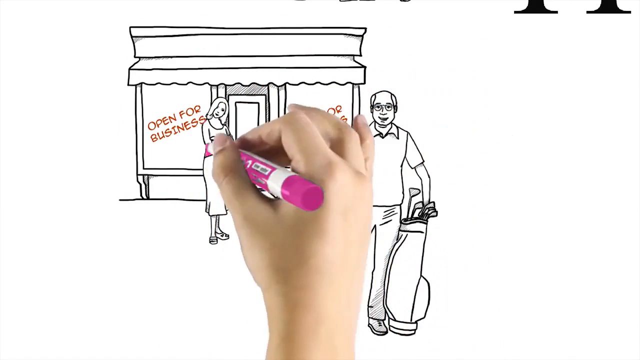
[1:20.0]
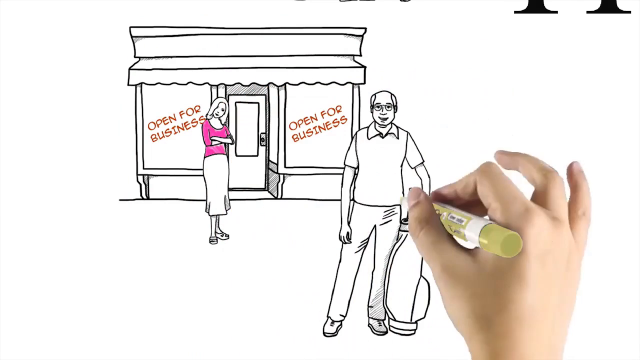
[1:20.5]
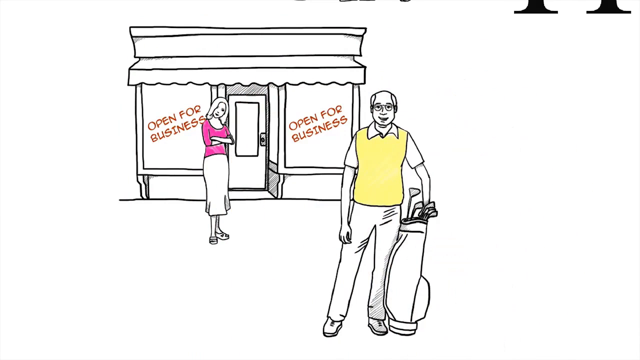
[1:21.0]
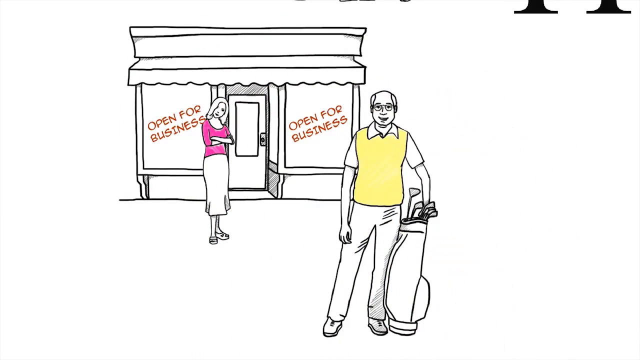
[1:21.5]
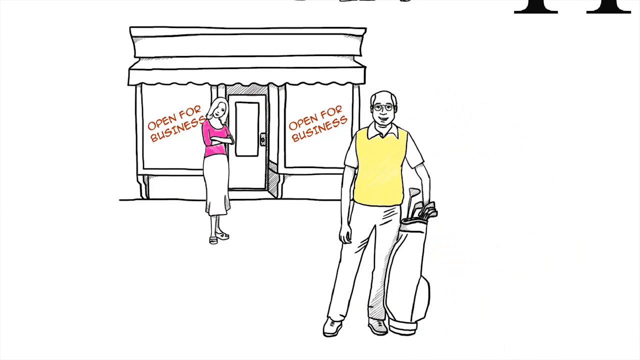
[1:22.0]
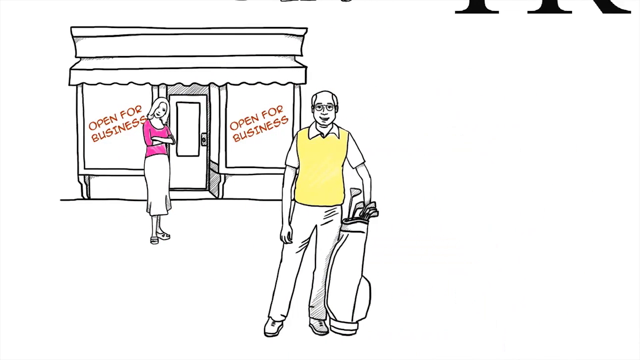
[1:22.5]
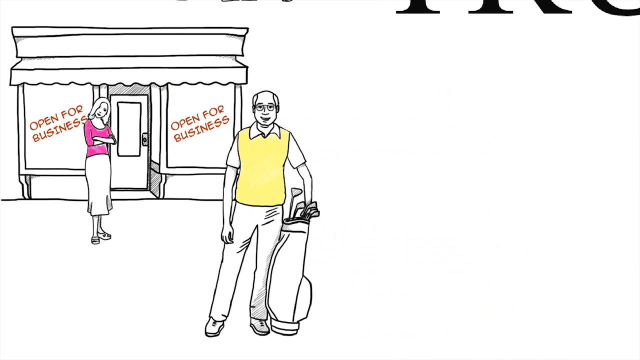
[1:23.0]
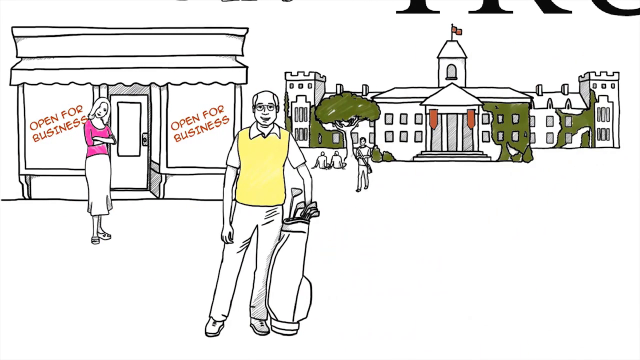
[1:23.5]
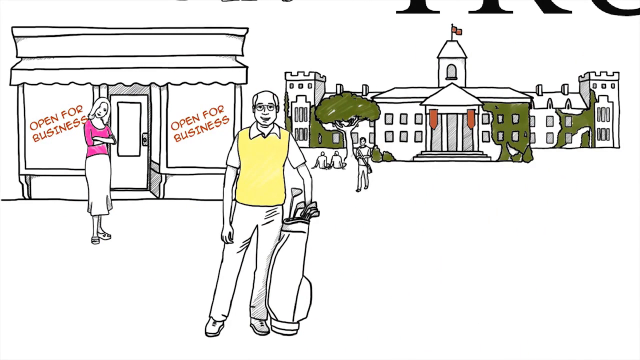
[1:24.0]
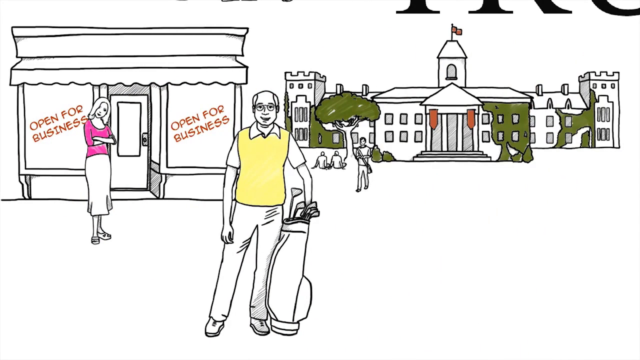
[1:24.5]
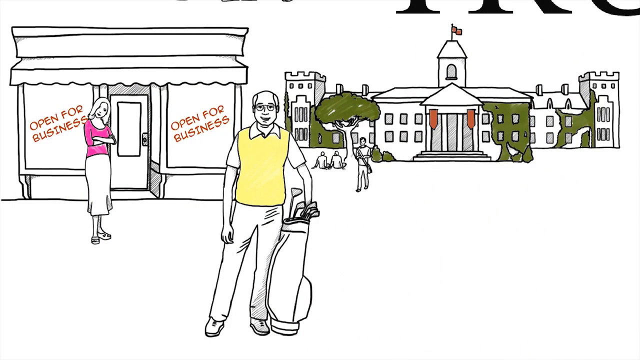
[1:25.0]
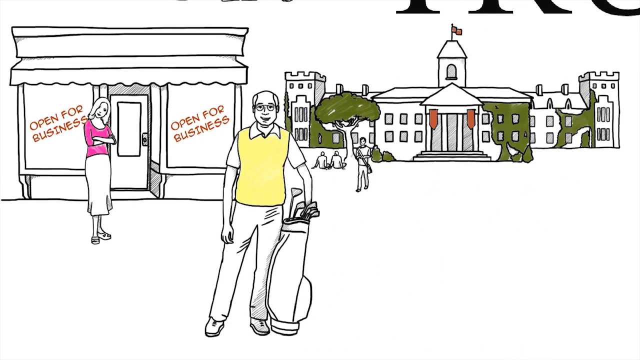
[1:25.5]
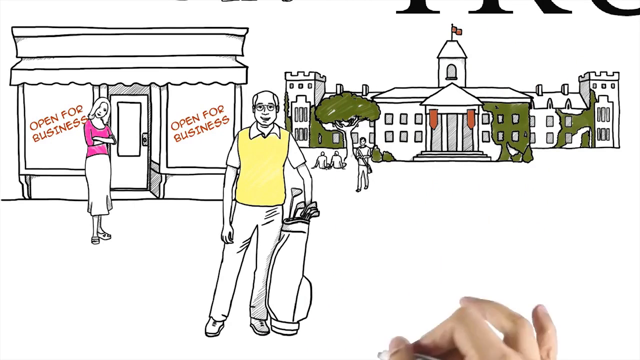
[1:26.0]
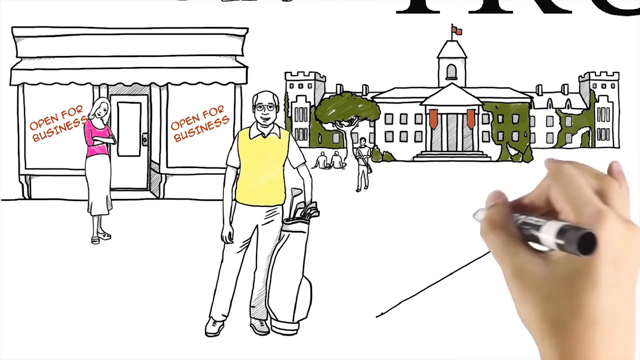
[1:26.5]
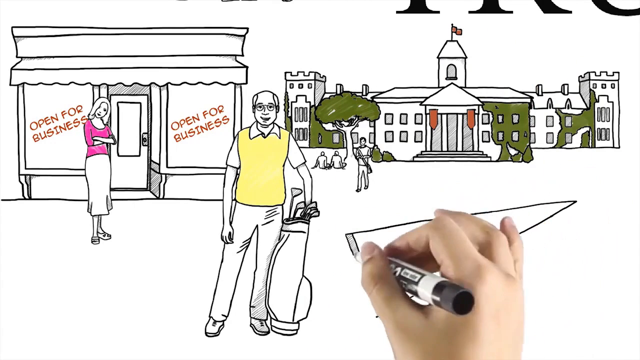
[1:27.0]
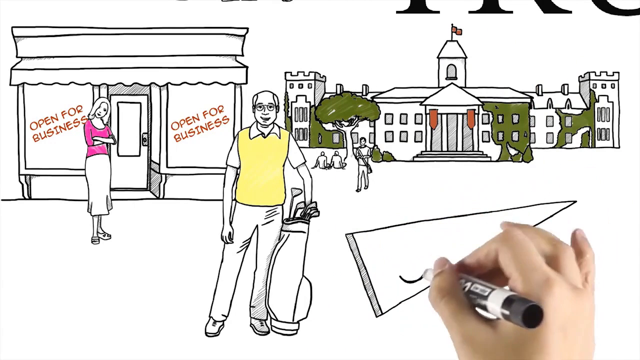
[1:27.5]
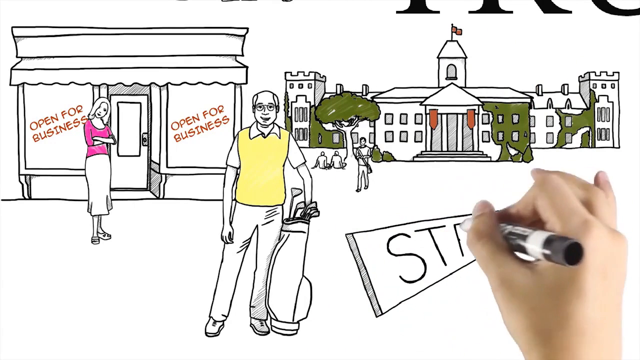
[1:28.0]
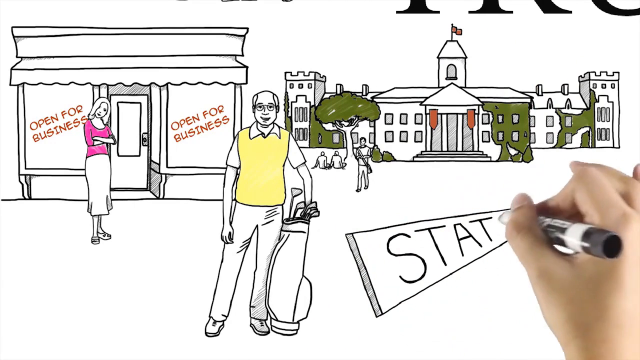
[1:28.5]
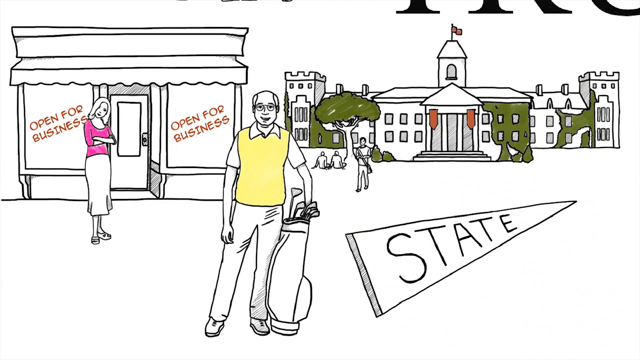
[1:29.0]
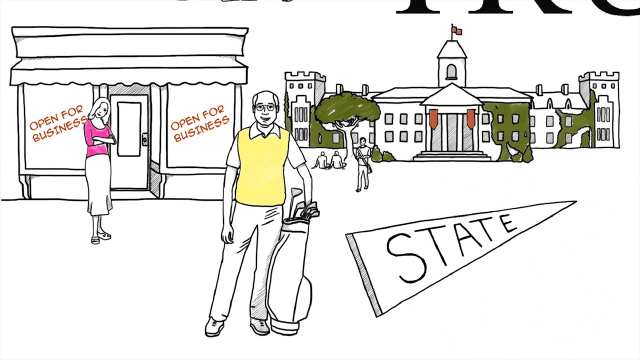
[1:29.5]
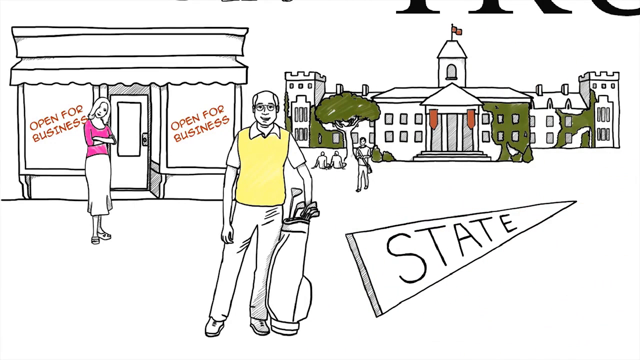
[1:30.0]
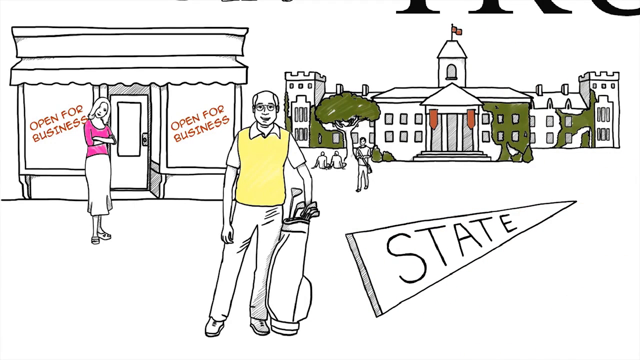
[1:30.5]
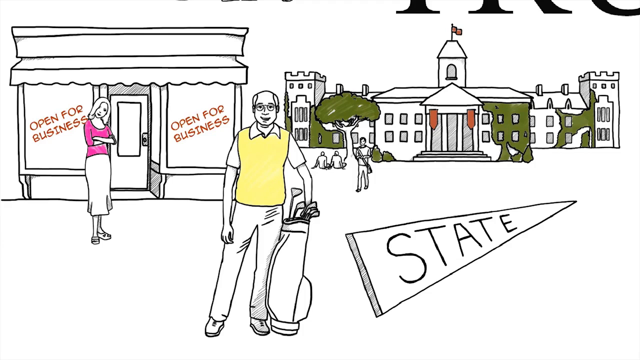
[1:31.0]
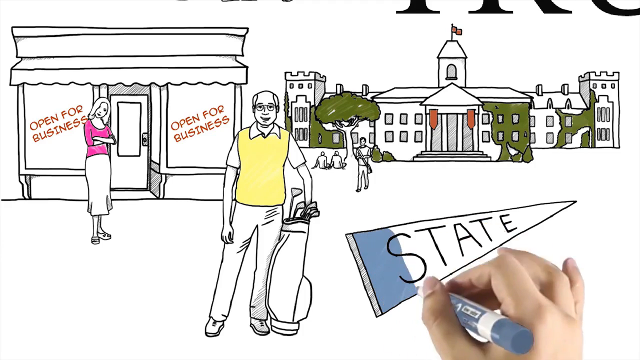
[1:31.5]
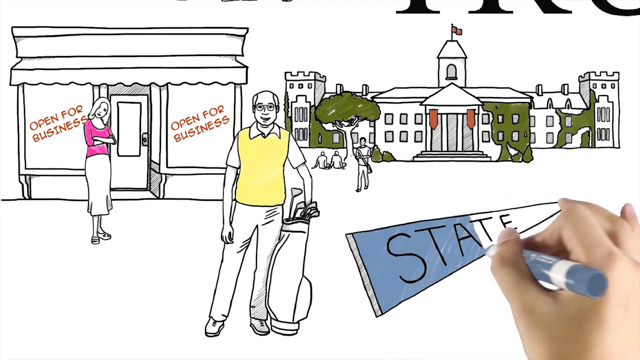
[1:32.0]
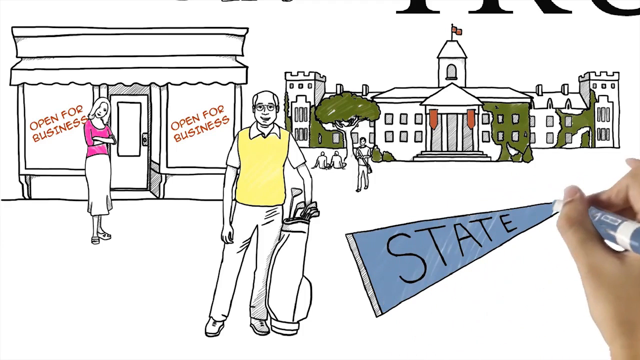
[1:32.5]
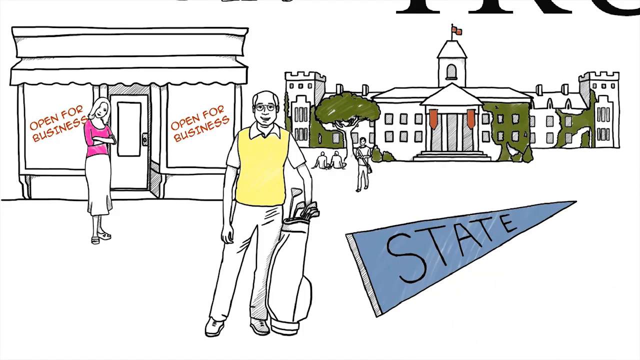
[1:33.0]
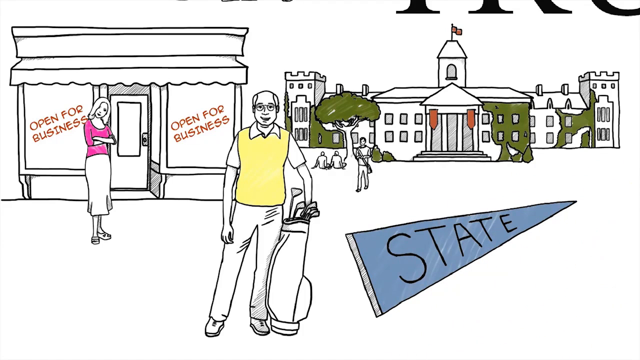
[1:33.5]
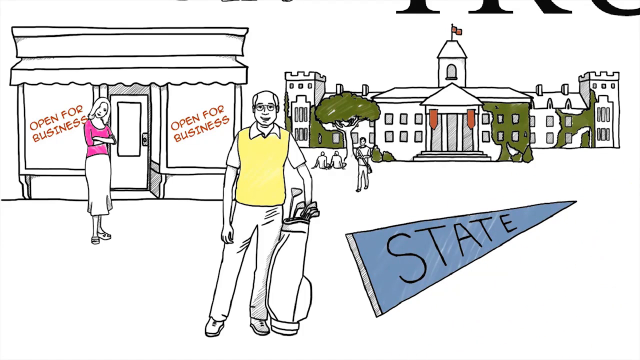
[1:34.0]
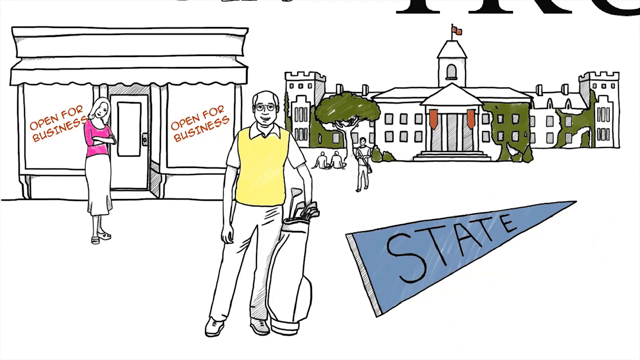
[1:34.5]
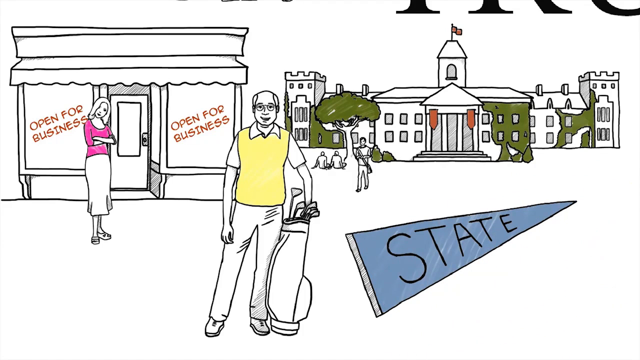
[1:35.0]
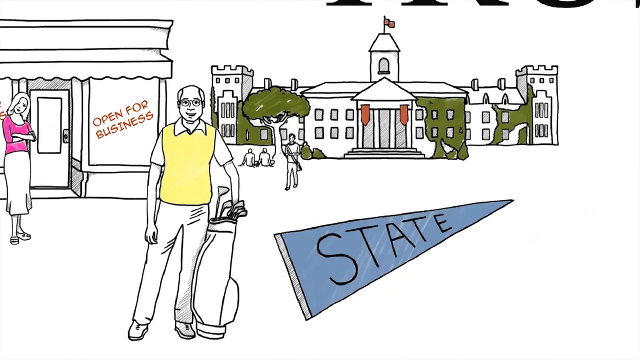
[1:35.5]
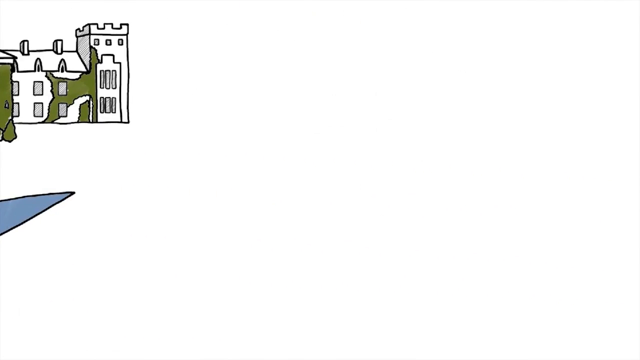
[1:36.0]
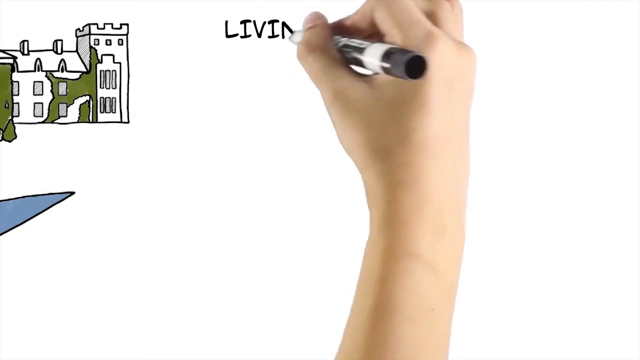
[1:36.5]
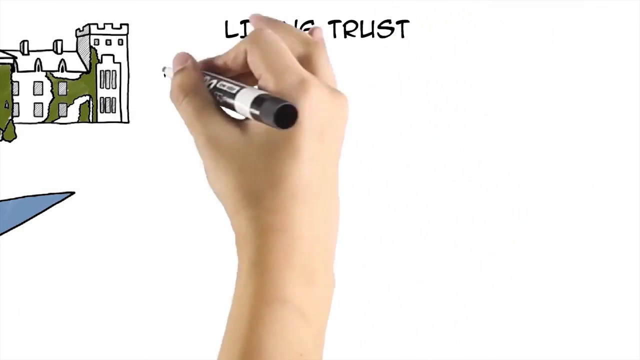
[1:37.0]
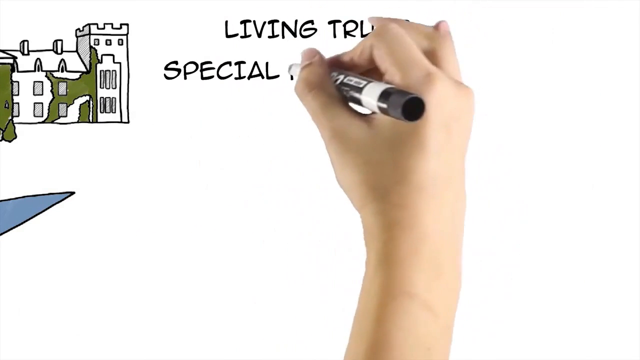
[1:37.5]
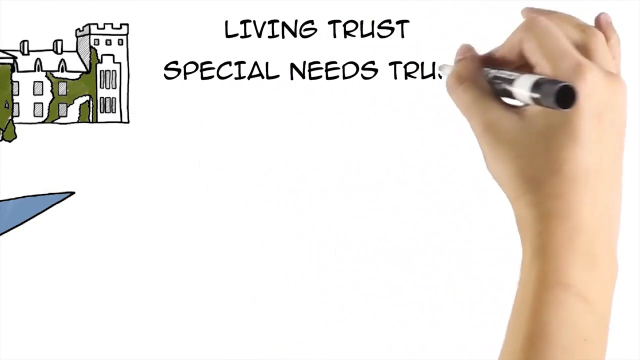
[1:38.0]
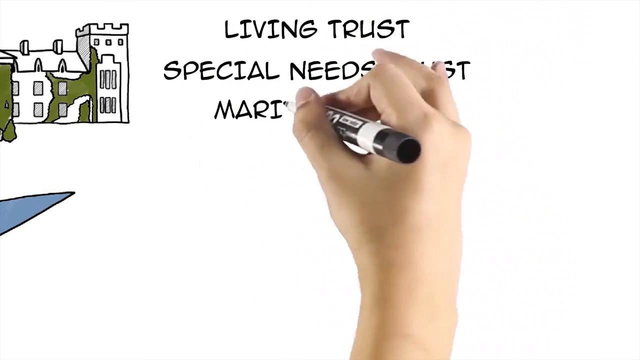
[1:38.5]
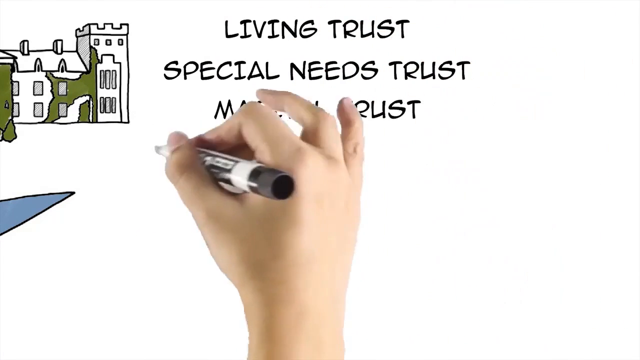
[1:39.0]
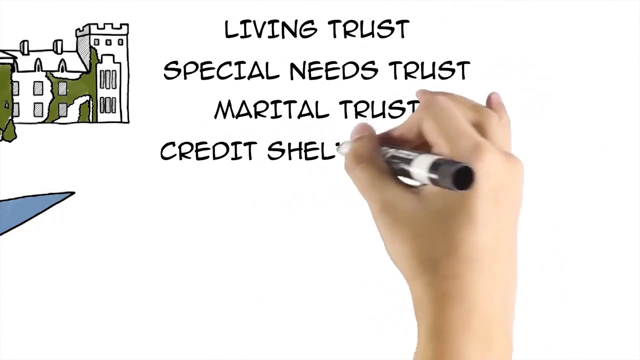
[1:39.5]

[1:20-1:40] The pen changes to pink, and the white hand with short nails colours in the top of the woman standing in front of the shop in pink. The man's top, a woolly vest top, is coloured yellow. An important-looking building is then pushed in from the side, and the hand writes "STATE" in capital letters on a pennant flag, which is triangular and coloured pale blue, the pen in the hand having changed colour again. These slide off to the left, and the pen writes "LIVING TRUST, SPECIAL NEEDS TRUST, MARITAL TRUST, CREDIT SHELTER" in black capital letters. The very edge of the castle-like parts of the important building is still visible on the left side of the screen.